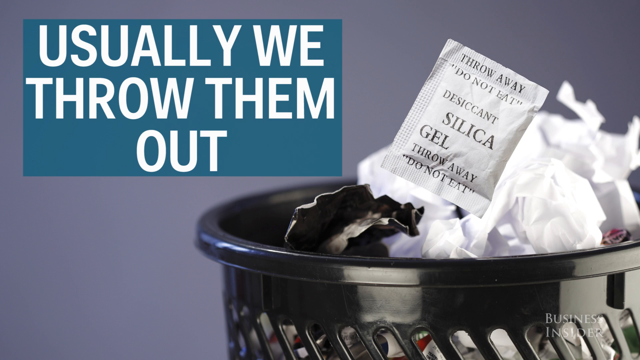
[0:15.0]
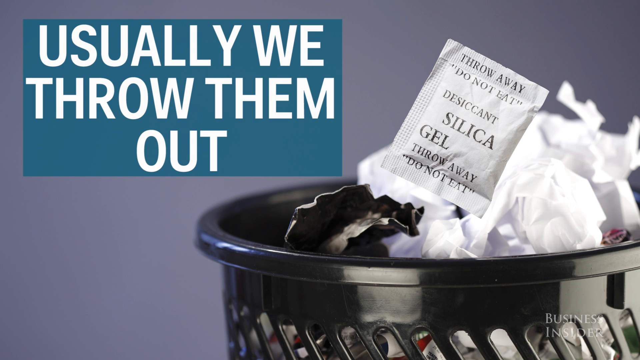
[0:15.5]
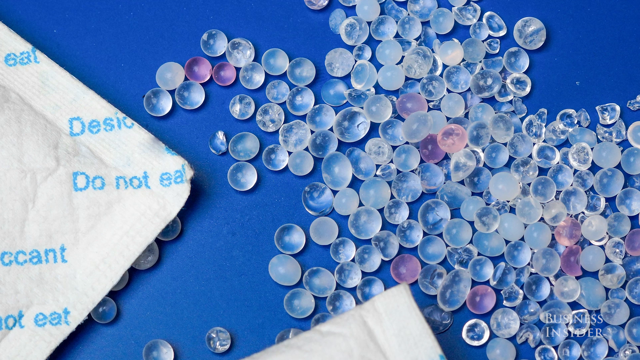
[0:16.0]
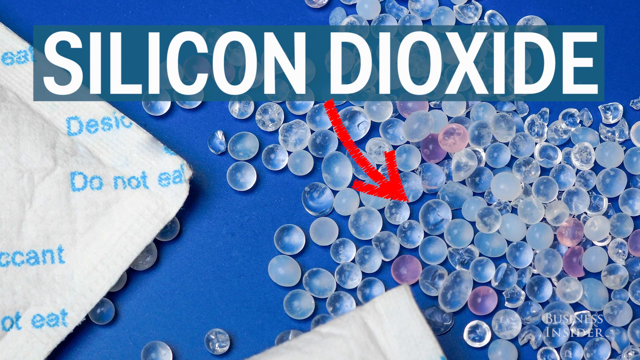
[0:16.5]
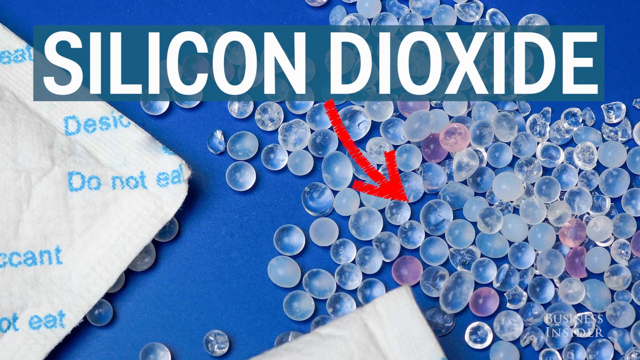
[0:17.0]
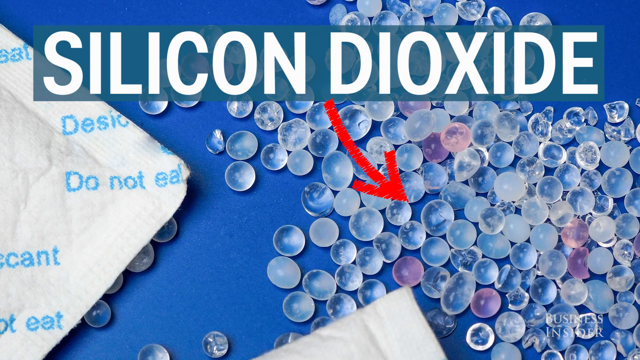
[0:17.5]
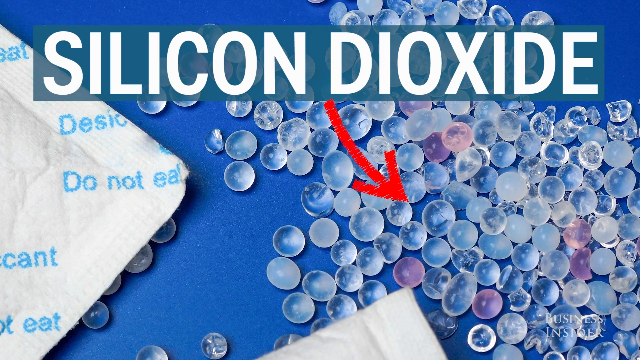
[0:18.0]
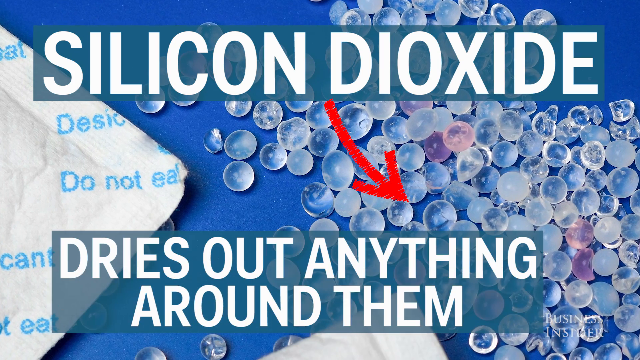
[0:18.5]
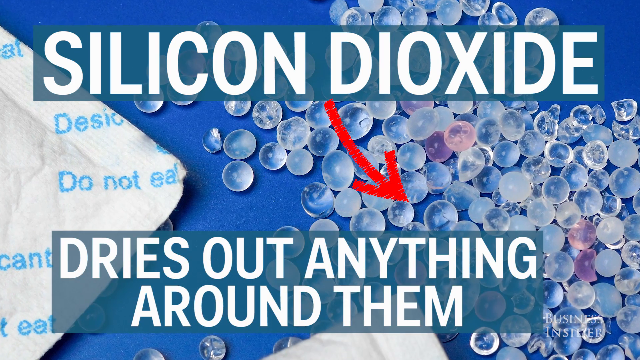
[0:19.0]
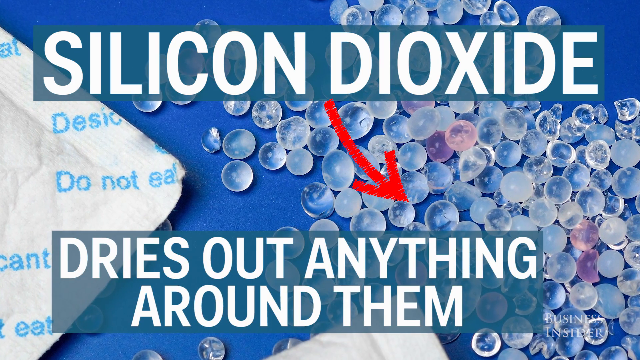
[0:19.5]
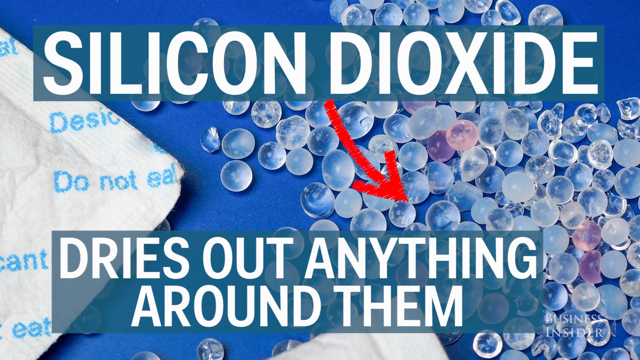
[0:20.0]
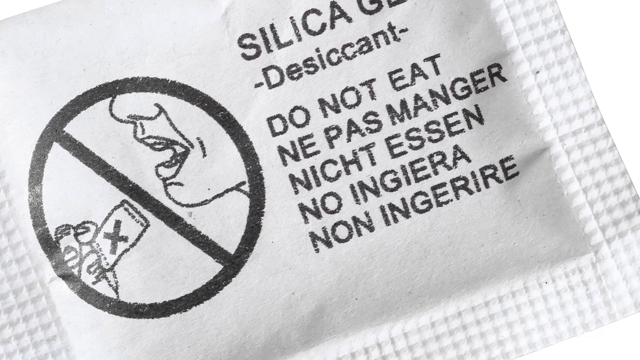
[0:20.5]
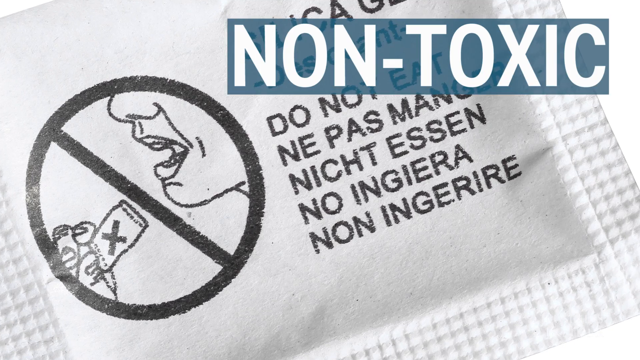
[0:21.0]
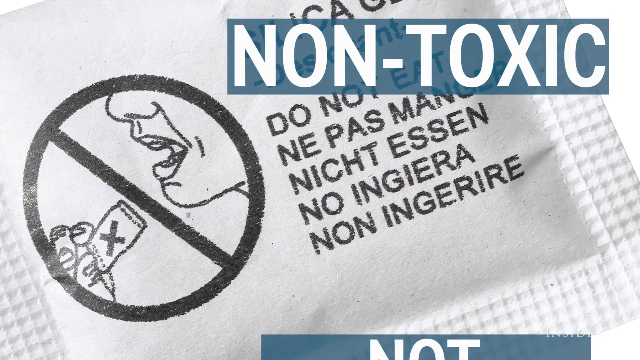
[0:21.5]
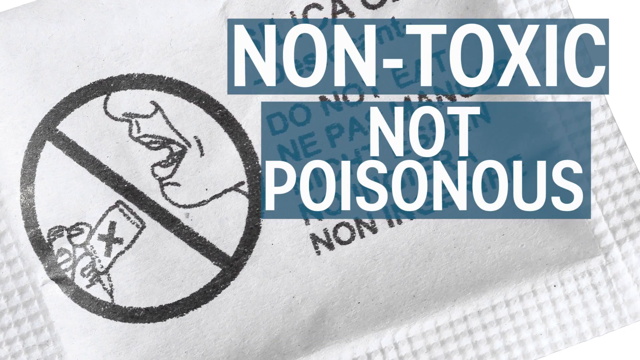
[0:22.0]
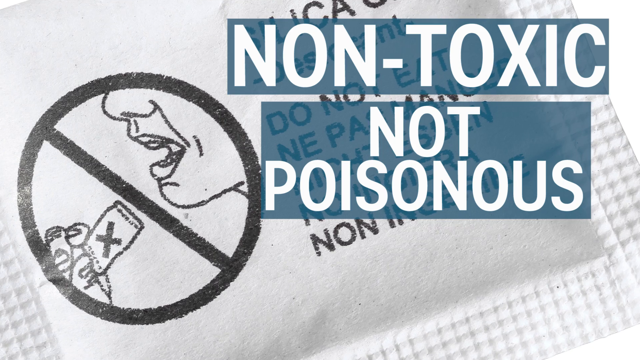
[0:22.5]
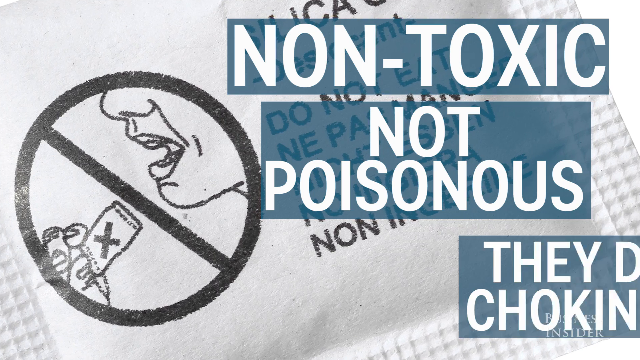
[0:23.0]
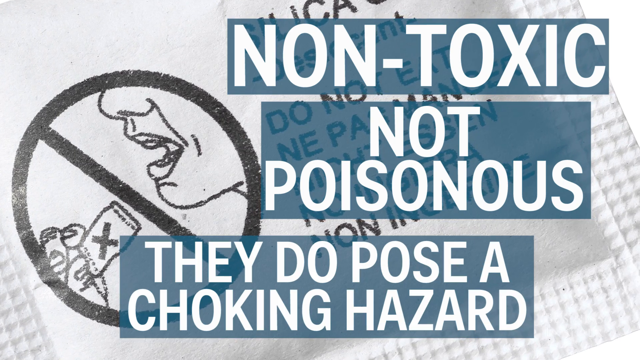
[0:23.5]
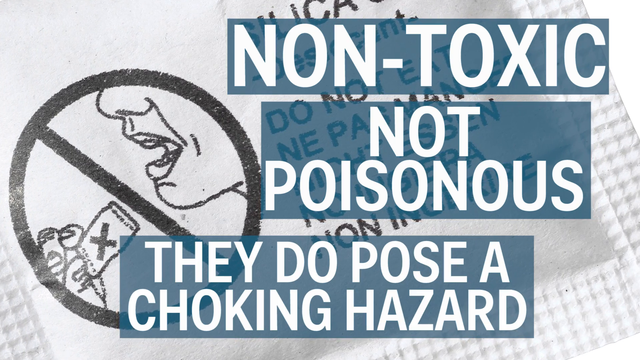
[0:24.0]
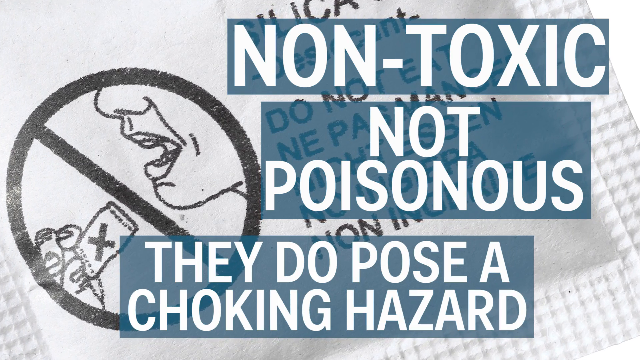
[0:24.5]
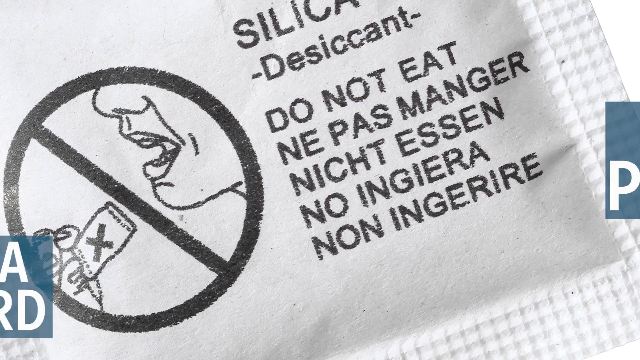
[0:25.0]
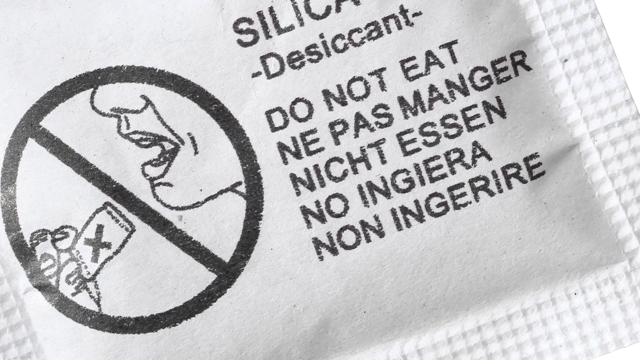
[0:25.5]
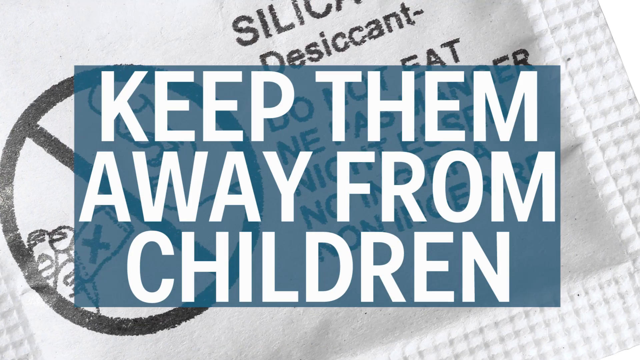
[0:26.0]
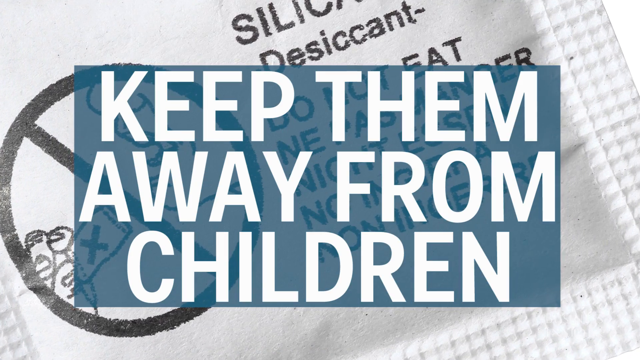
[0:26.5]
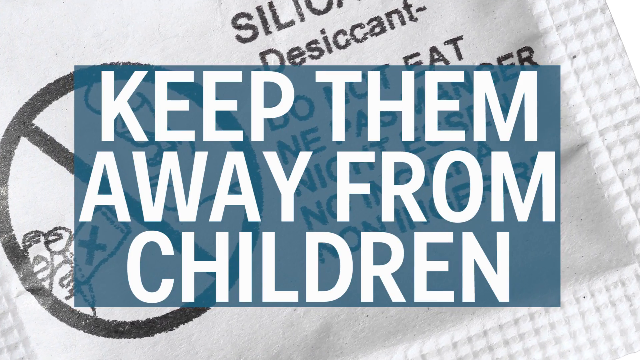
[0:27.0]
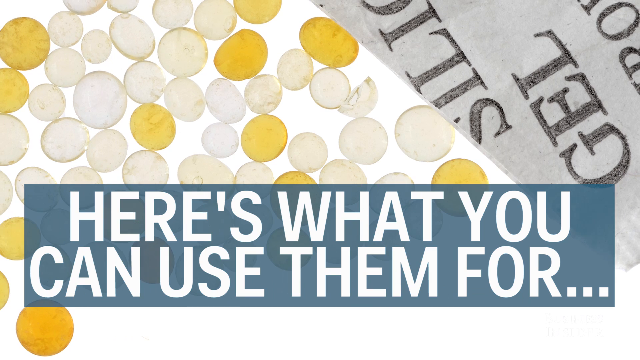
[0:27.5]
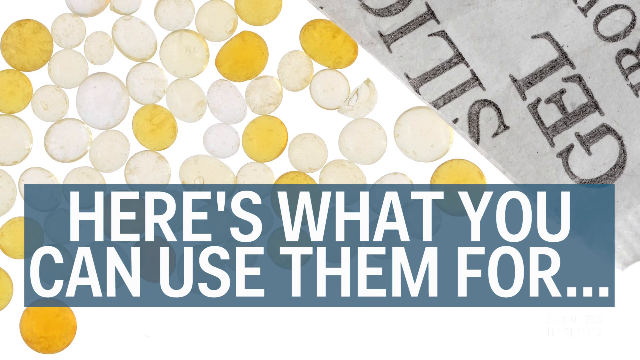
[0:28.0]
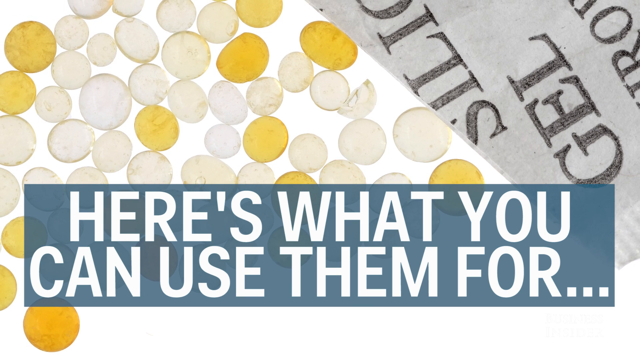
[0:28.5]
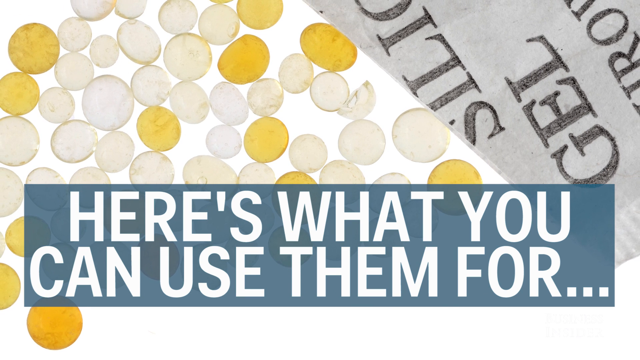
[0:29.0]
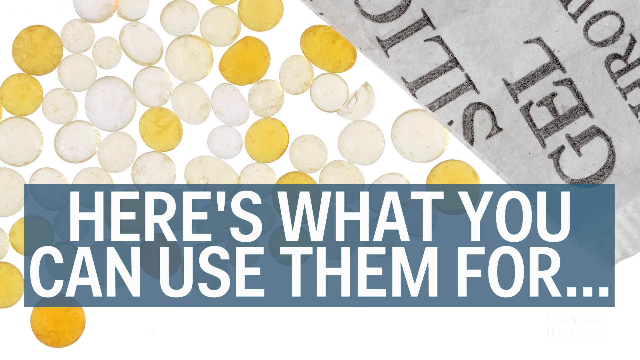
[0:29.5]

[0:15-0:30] On-screen text says "silicon dioxide," with a red arrow pointing to the silica gels. The text then states that the silicon dioxide dries out anything around it, and next that the silica gel is non-toxic and not poisonous. A label on the back of one of the silica gel bags says "do not eat" and carries a picture of a mouth, showing a silica gel in someone's hand near someone's mouth with an X through it; the label also says "keep away from children." The video then begins listing examples of what silica gel can be used for.